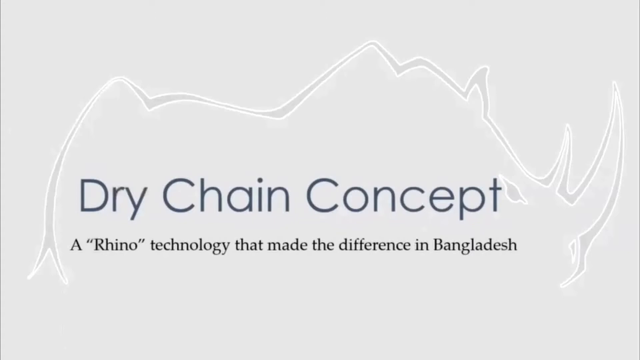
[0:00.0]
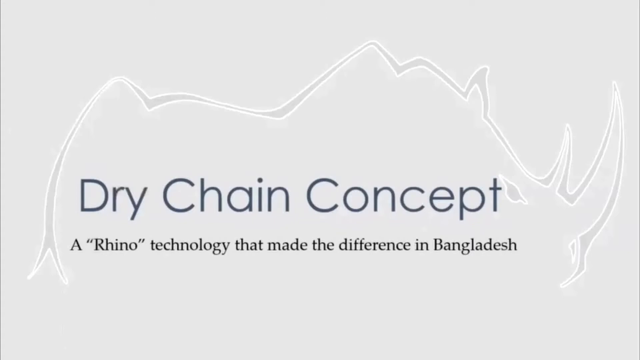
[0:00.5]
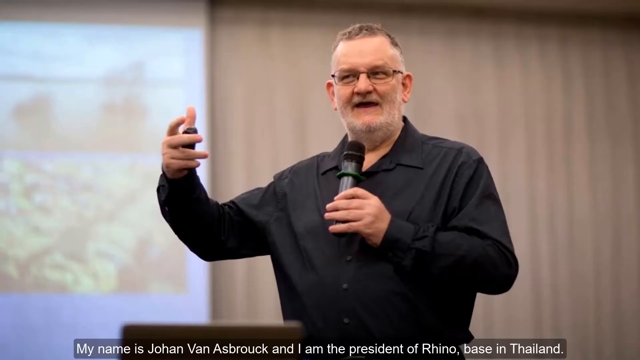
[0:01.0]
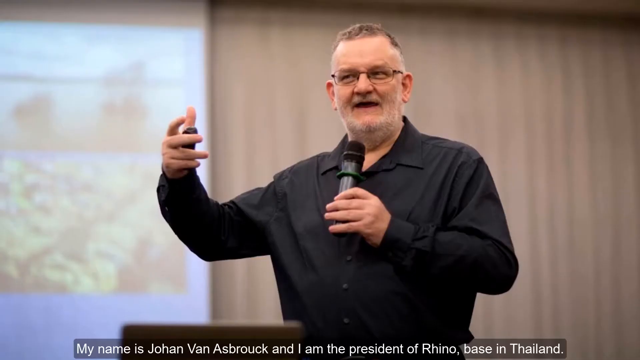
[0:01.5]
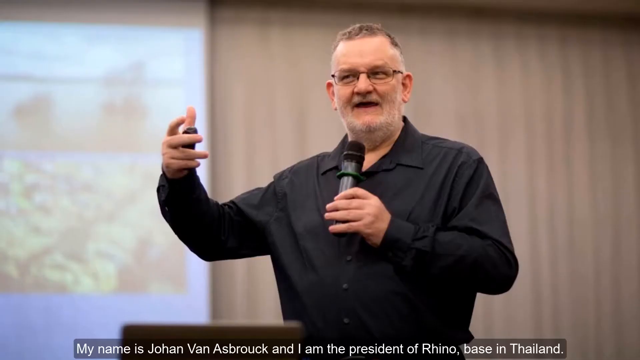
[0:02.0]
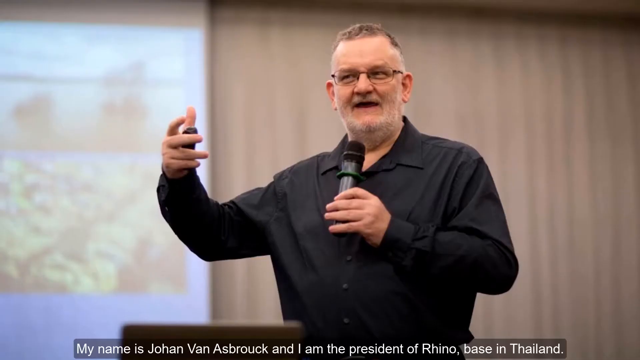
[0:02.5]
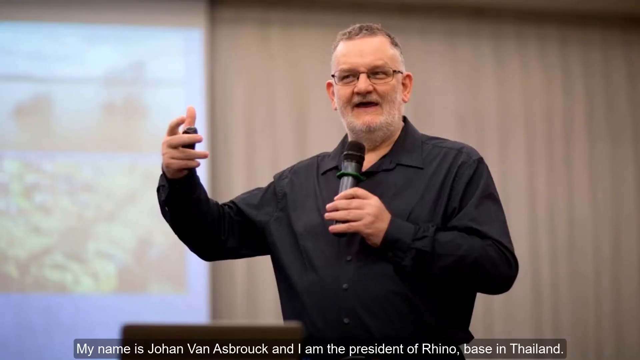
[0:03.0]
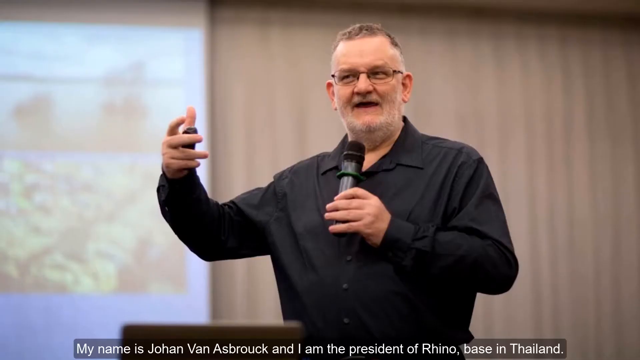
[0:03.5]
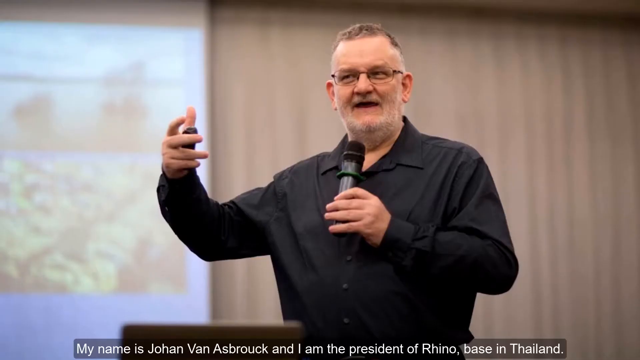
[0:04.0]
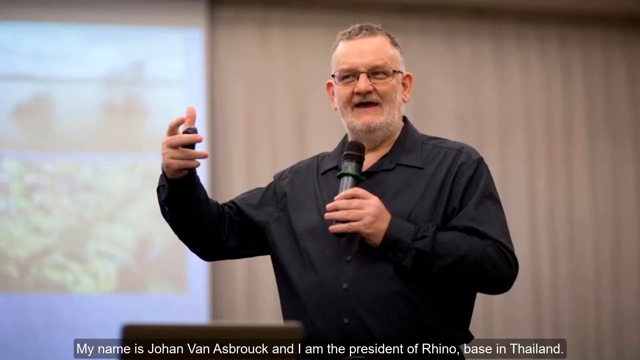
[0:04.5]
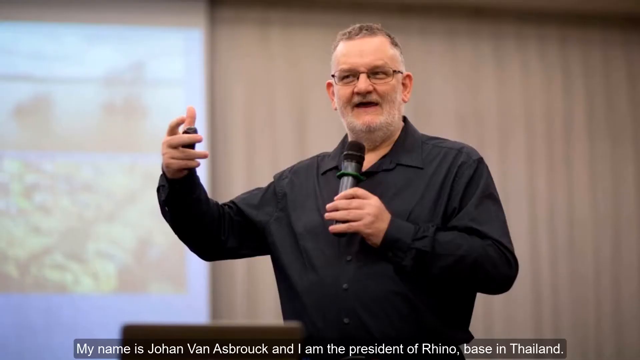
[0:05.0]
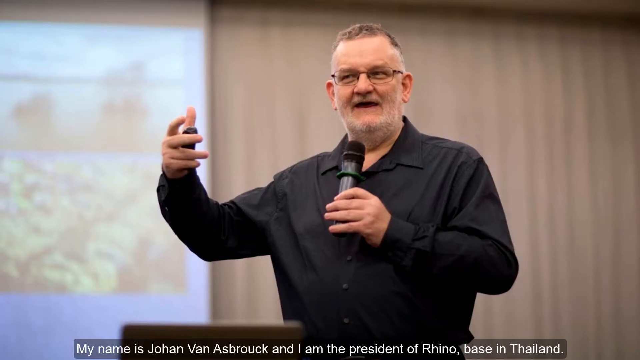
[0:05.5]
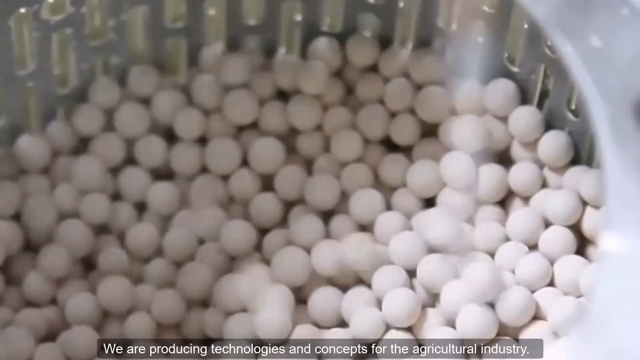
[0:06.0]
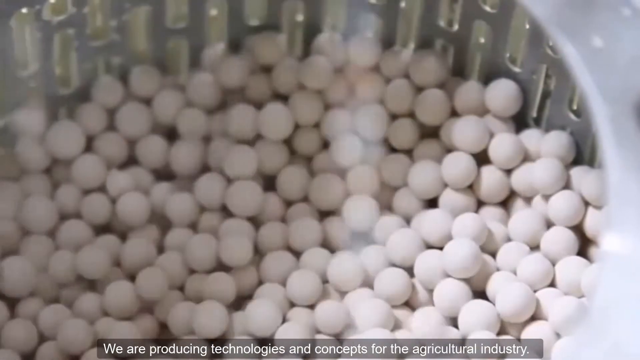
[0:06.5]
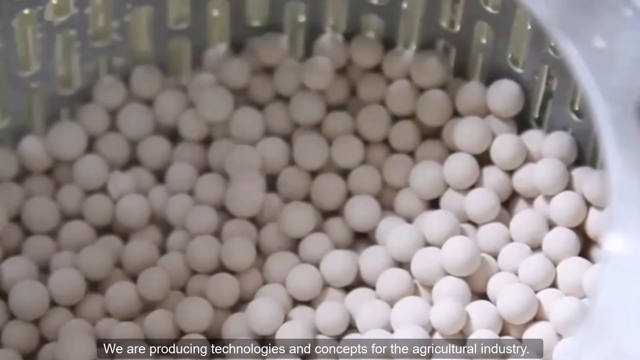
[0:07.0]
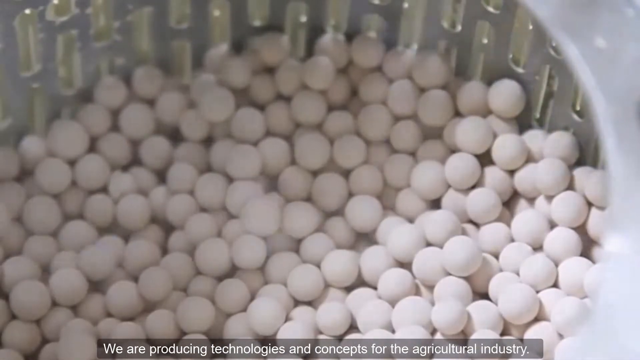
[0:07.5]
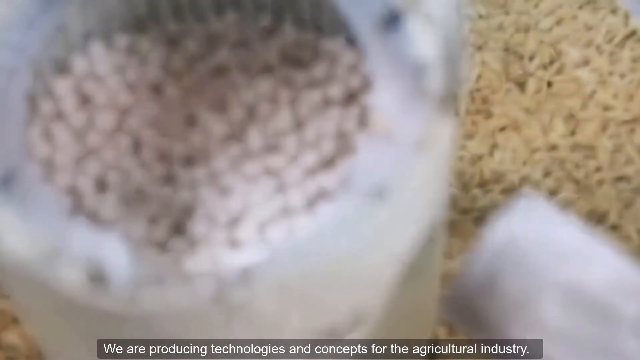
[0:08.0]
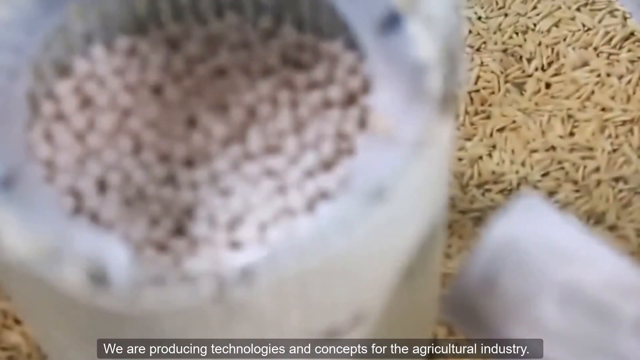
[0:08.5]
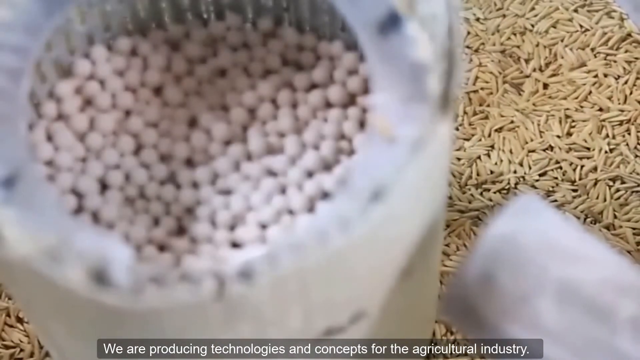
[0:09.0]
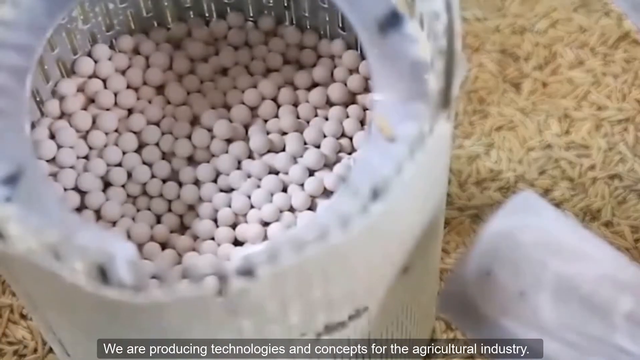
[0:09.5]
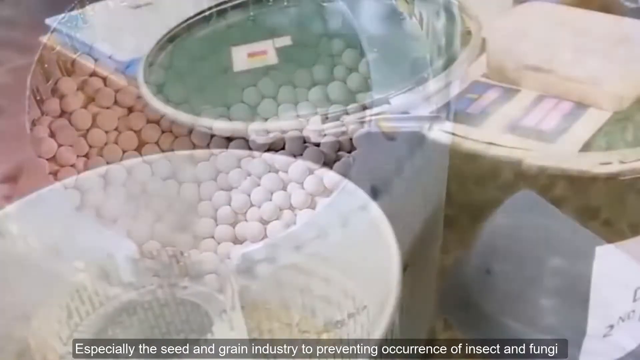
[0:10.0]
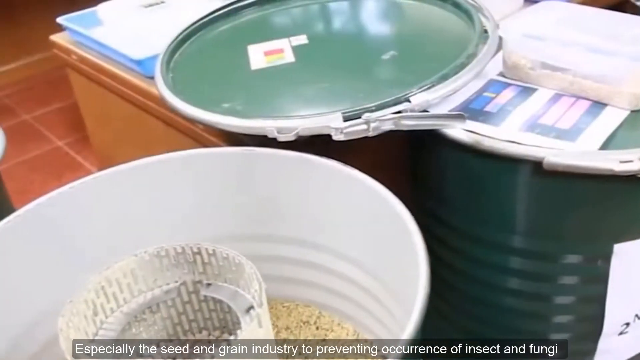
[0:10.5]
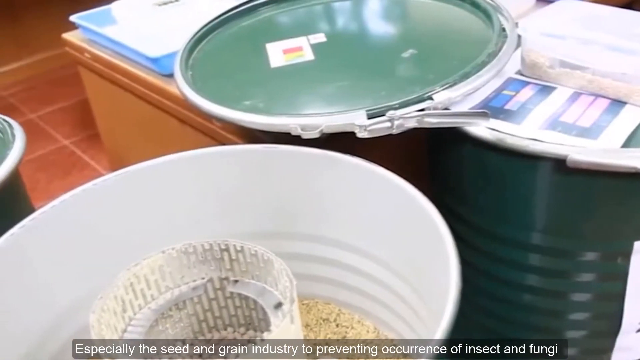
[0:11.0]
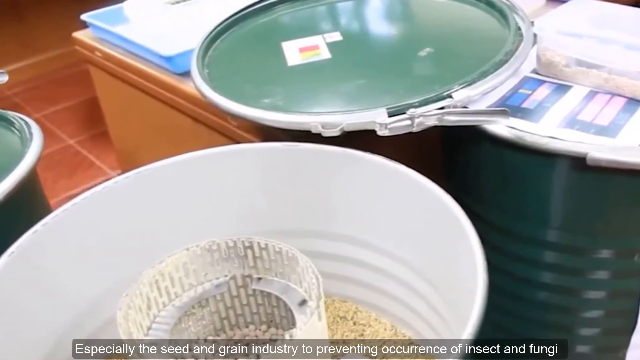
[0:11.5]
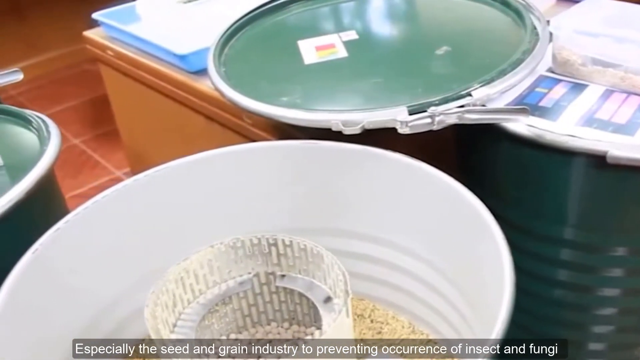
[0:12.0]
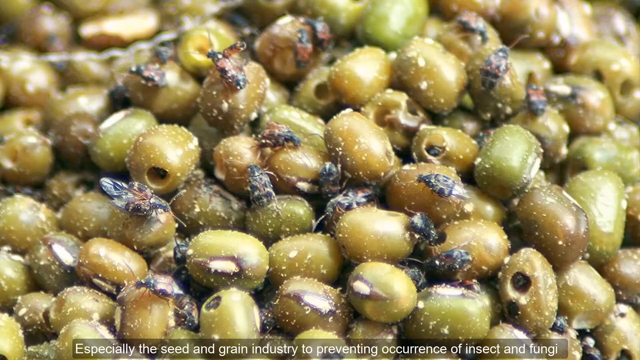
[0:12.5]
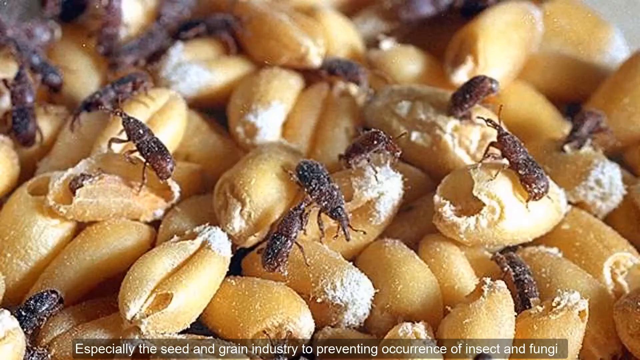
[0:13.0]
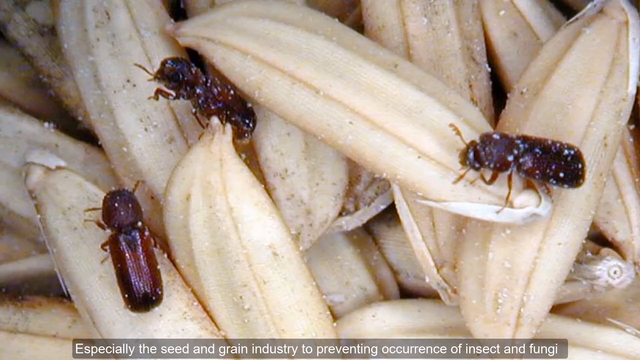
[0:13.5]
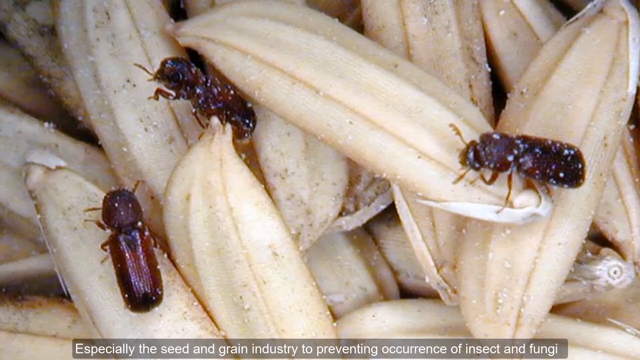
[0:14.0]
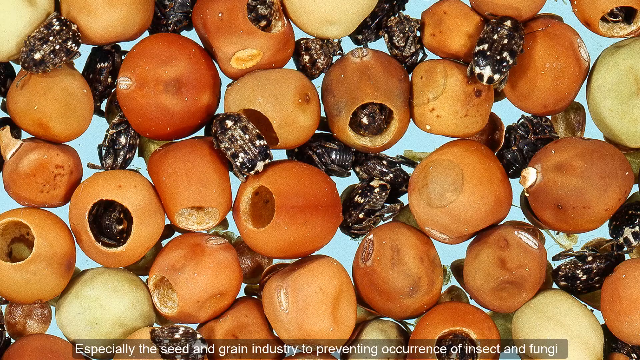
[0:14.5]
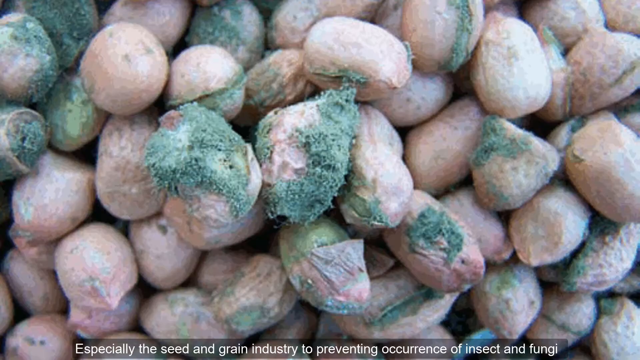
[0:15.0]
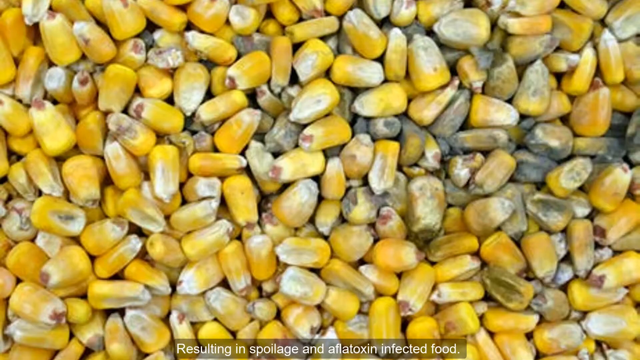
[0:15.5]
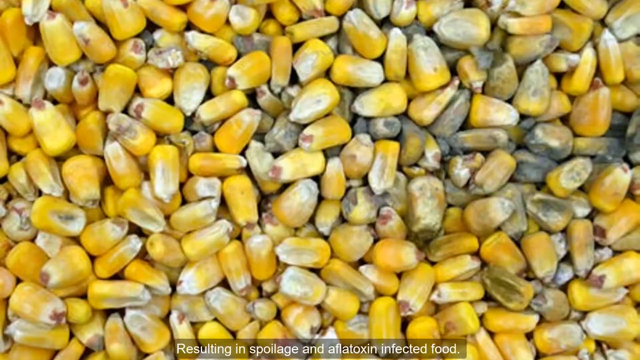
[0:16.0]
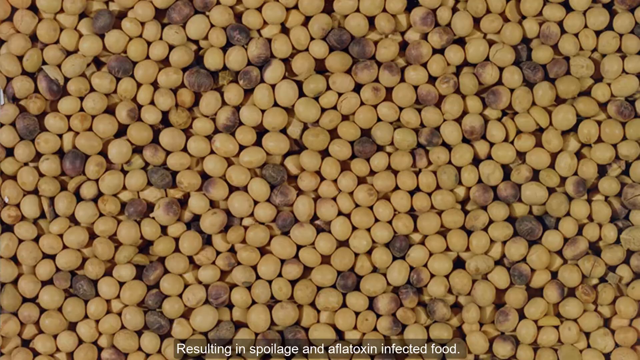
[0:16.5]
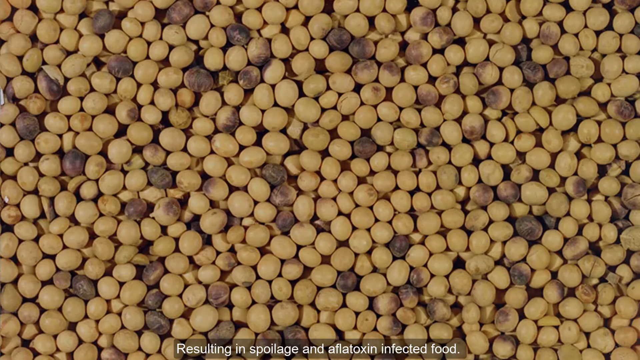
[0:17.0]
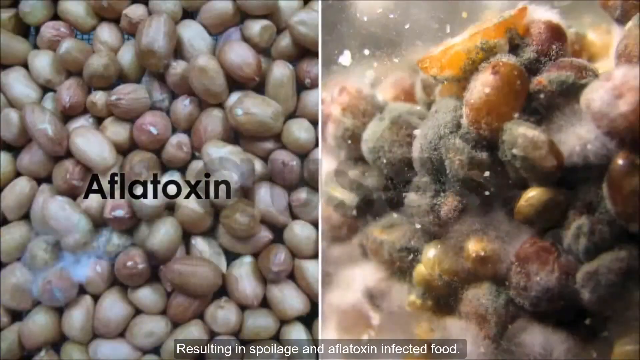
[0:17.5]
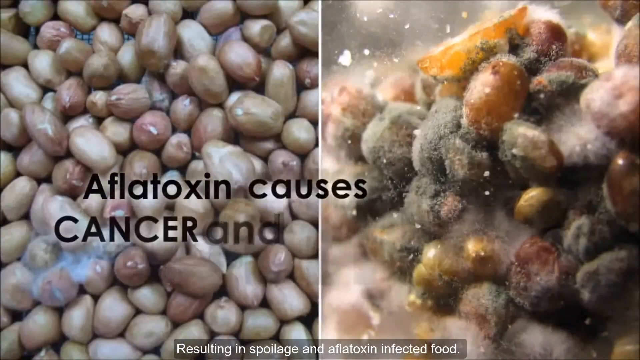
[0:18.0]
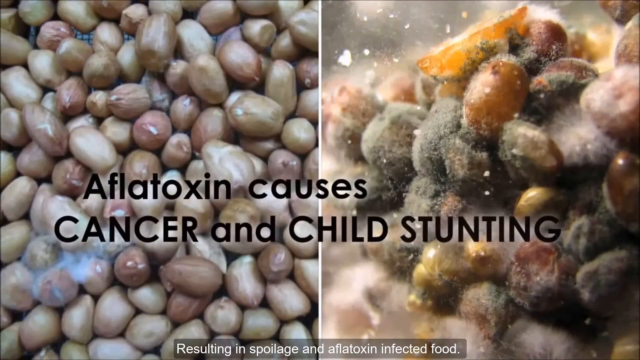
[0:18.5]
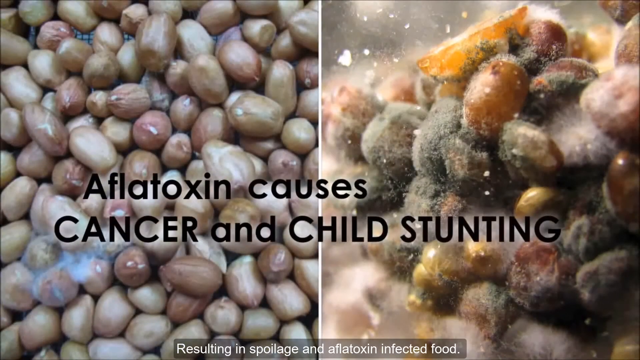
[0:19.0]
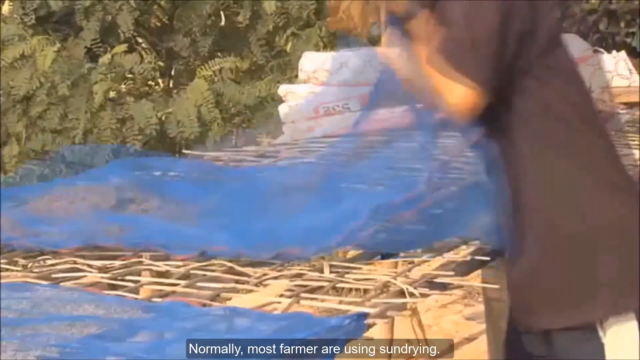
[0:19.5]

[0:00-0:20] The opening screen is a page or board that reads "Dry Chain Concept" and, below that, 'A "Rhino" technology that made the difference in Bangladesh', with "Rhino" in initial caps and in quotation marks. A sort of sketchy outline of a rhinoceros, its horn to the right of the screen, is in the background behind the words. The first image is a photograph of a man in a black long-sleeve shirt with the sleeves rolled all the way out; he wears glasses, is maybe around 50, and has a kind of scruffy white beard. He holds a microphone in his left hand in front of his mouth and gestures with his right hand out, bent but forward, as though speaking in front of a crowd. Next, a lot of very small white balls, maybe like little pearls but not shiny and rather rough-looking, possibly some kind of food, are dropped into a basket; the view is so close that there is no sense of scale. A two-shot follows, with the pearl-like things on the left and, on the right, what looks like basmati rice, maybe in a sack, again too close for context. A short video pans left to right across various buckets with things inside that are hard to identify. Then come close-up pictures of grains with little bugs crawling around on them; it is hard to tell whether the grain is rice, and some of it looks like corn. Text appears reading "Aflatoxin causes cancer and child stunting".